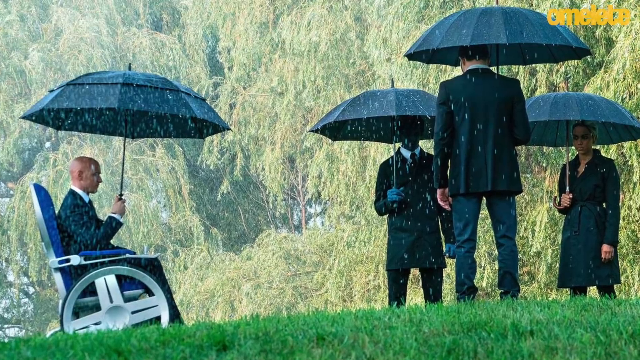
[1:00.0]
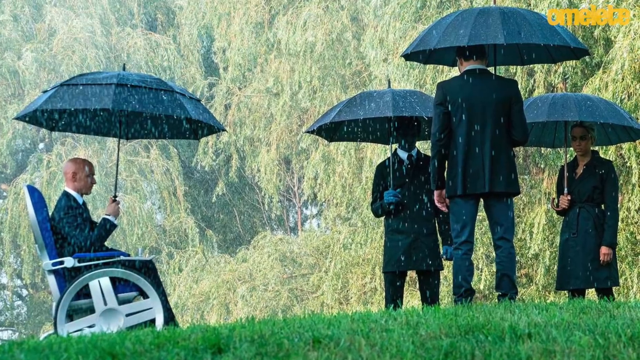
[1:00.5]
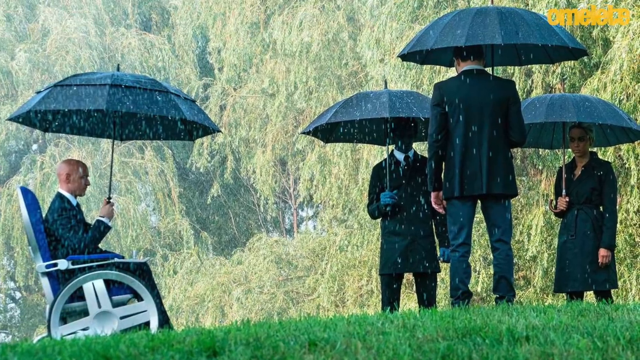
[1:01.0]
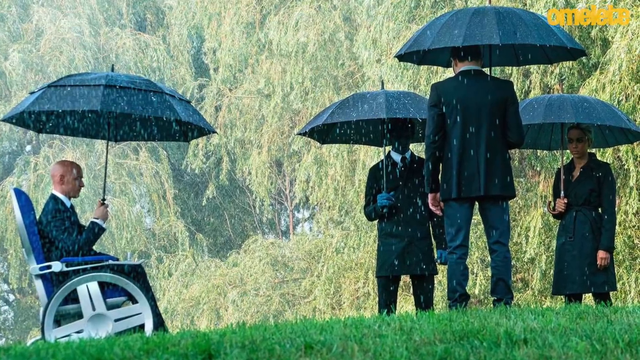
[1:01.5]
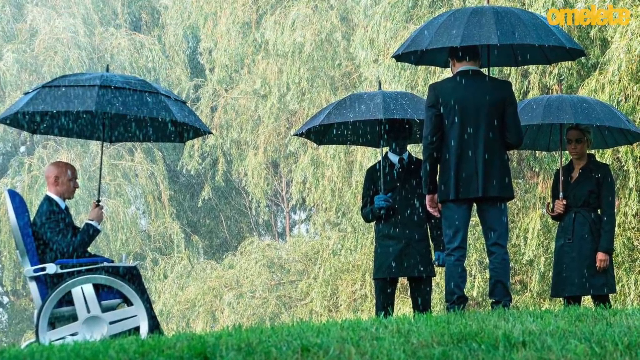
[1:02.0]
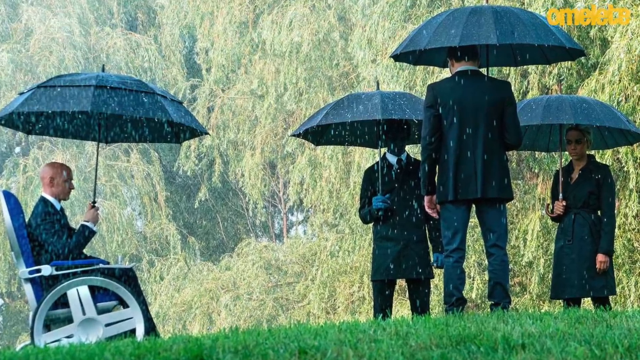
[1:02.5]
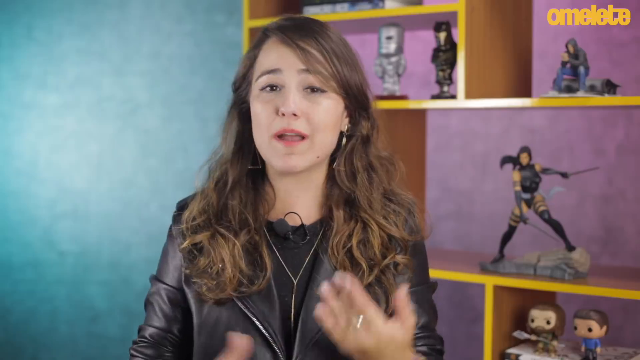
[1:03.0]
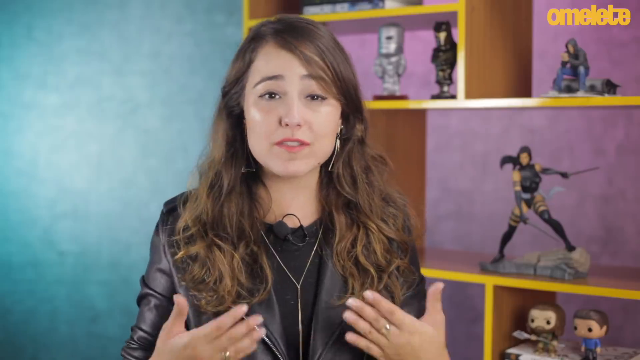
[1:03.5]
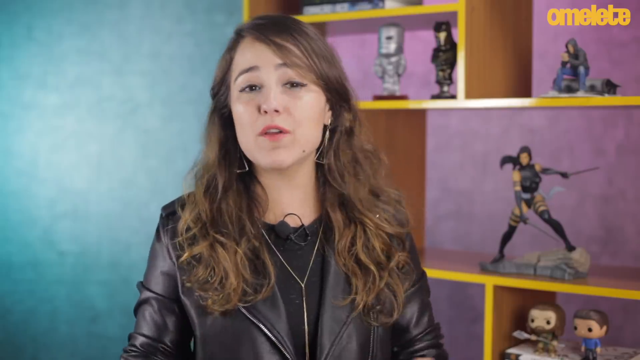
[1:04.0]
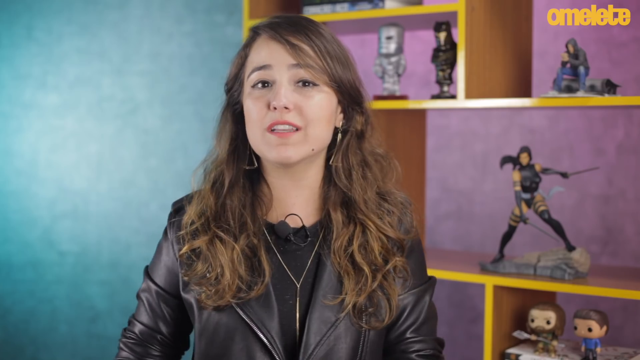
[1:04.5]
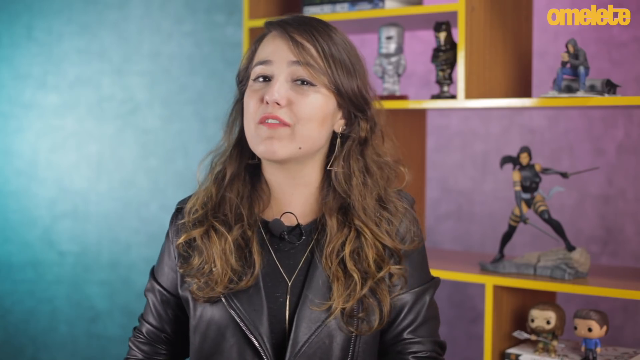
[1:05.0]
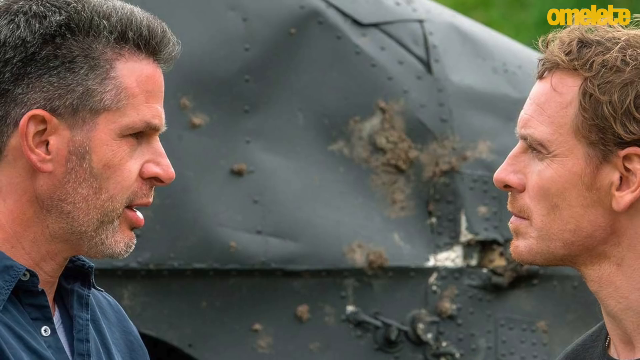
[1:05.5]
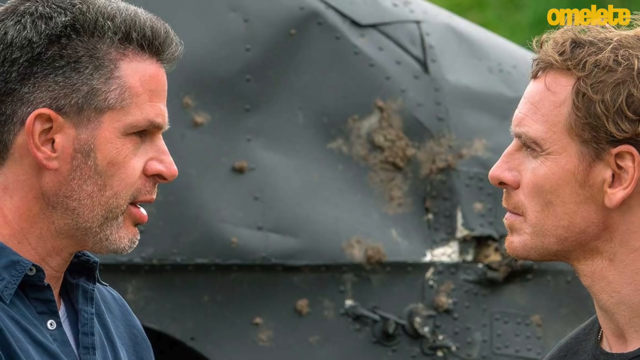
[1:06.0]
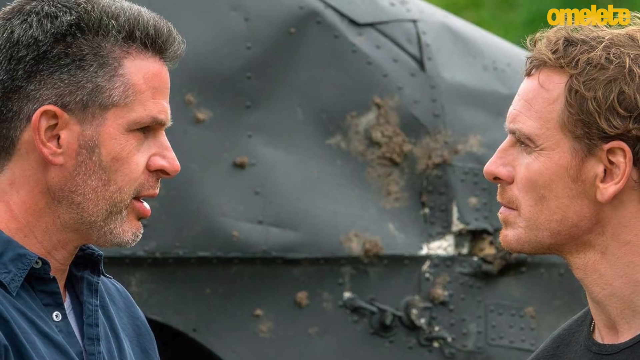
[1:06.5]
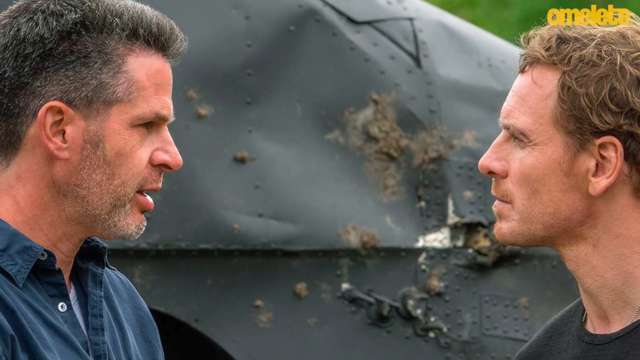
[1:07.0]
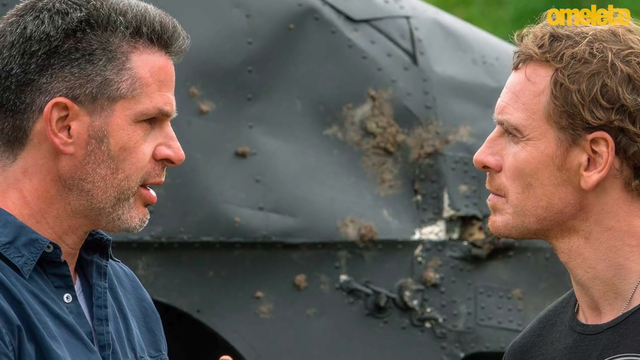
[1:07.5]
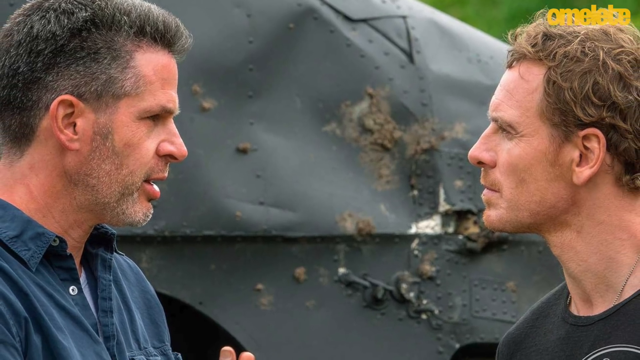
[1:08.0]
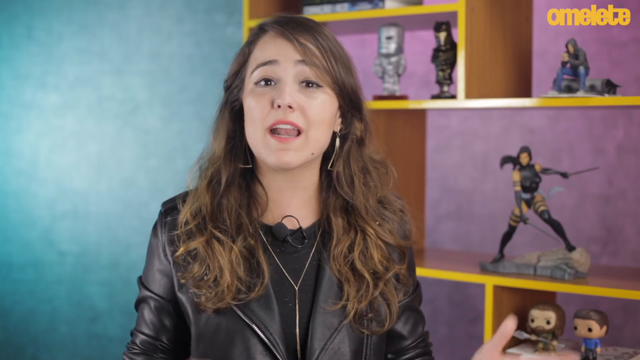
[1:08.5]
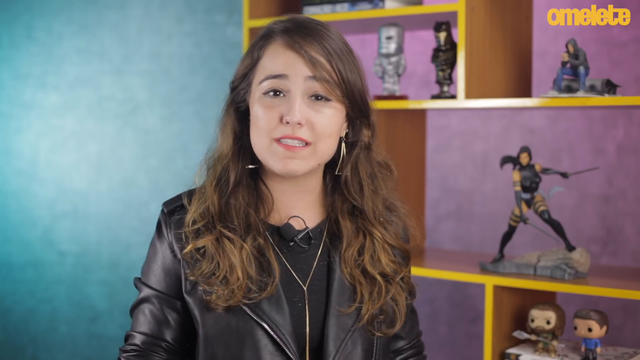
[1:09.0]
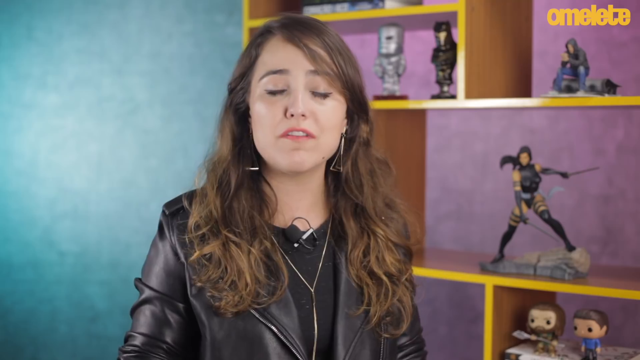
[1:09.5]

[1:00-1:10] Professor X, the other man facing the opposite direction, and another woman are on screen, all with umbrellas over their heads. The video switches back to the woman talking to the camera, then to two men, one of whom looks like Michael Fassbender, possibly as the character Magneto. It then switches back to the woman talking to the camera. The scene seems to be from the X-Men movies.